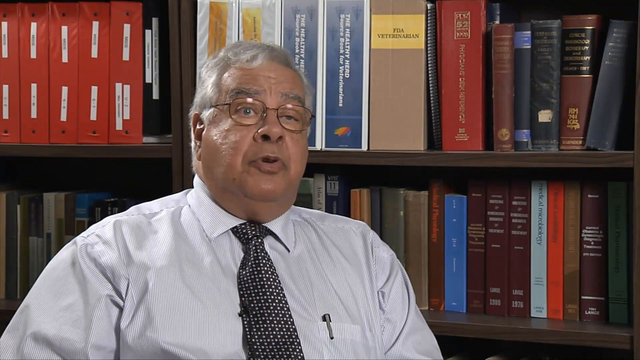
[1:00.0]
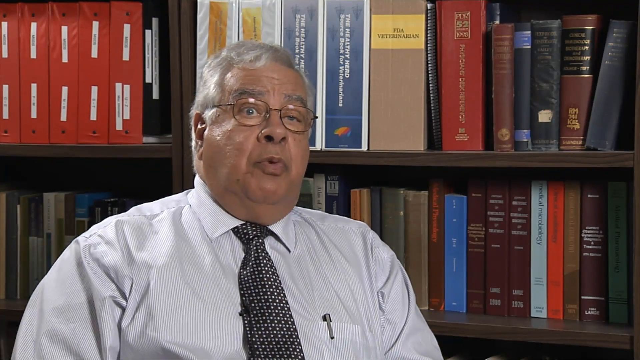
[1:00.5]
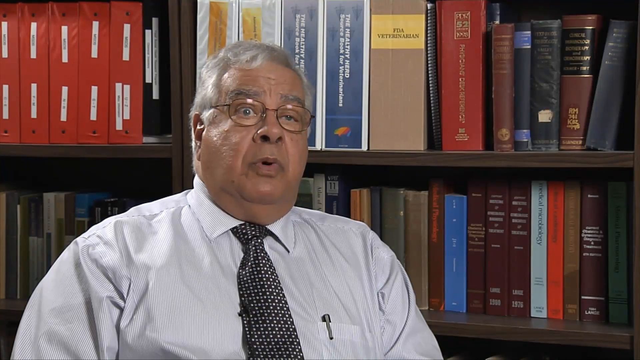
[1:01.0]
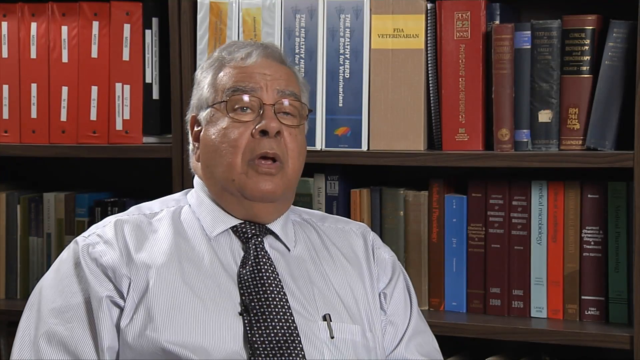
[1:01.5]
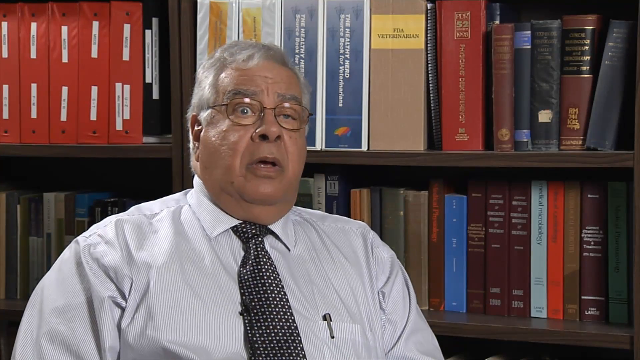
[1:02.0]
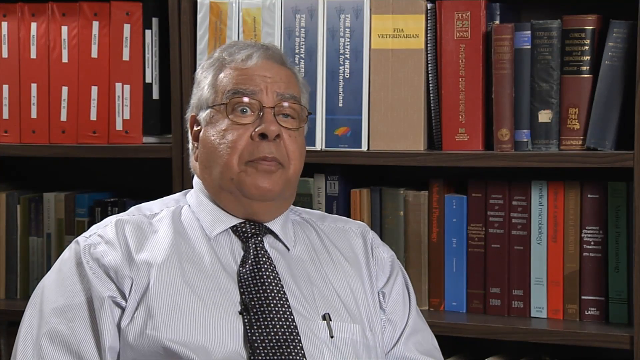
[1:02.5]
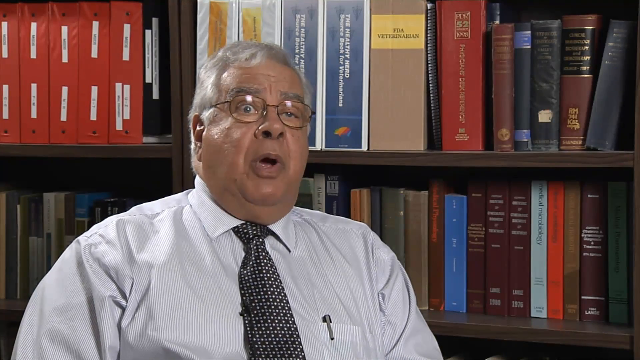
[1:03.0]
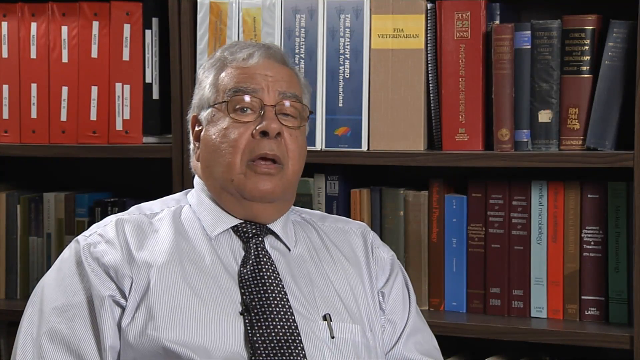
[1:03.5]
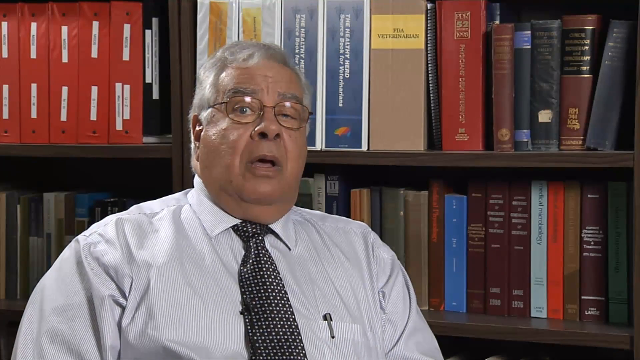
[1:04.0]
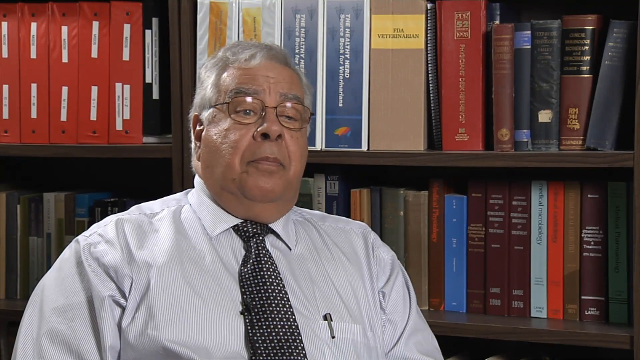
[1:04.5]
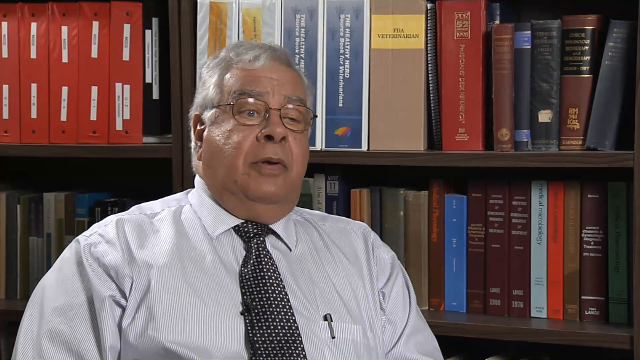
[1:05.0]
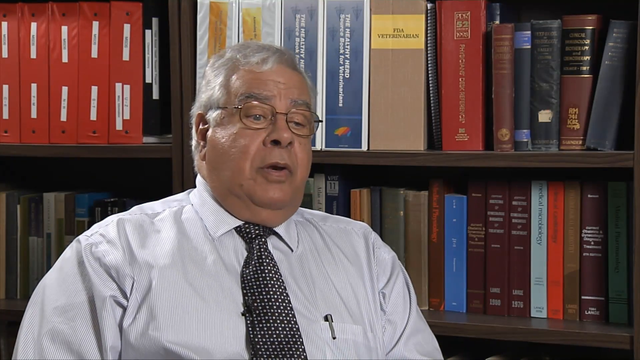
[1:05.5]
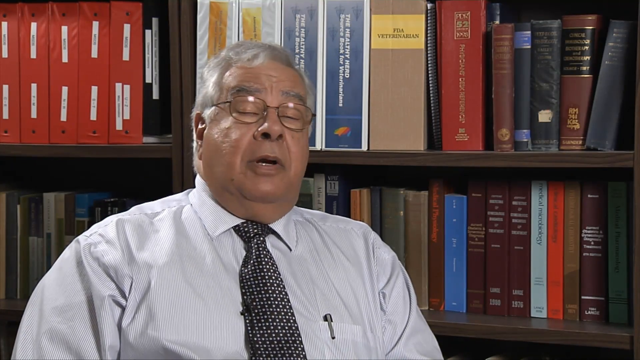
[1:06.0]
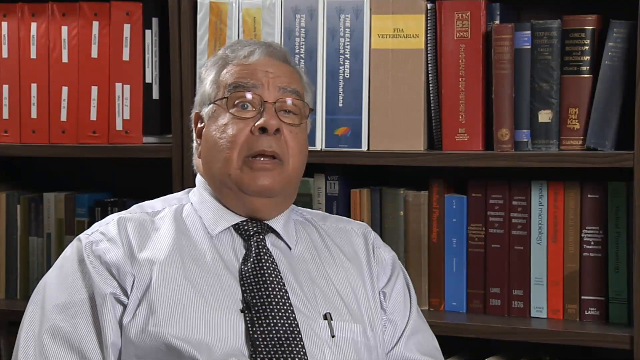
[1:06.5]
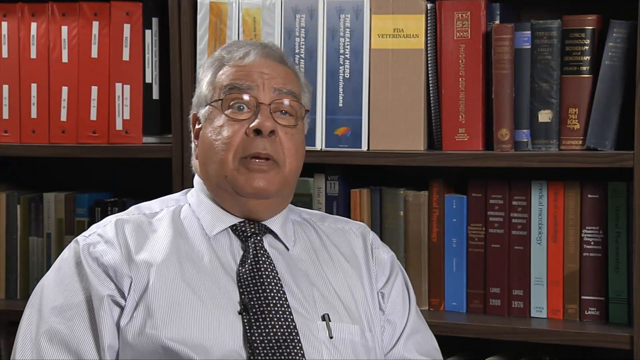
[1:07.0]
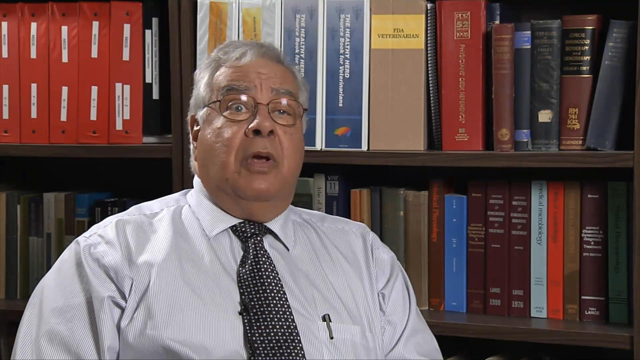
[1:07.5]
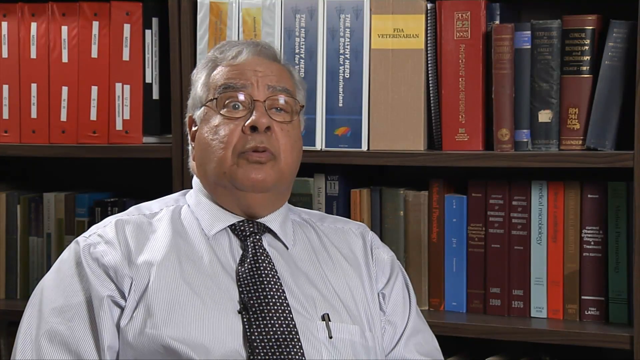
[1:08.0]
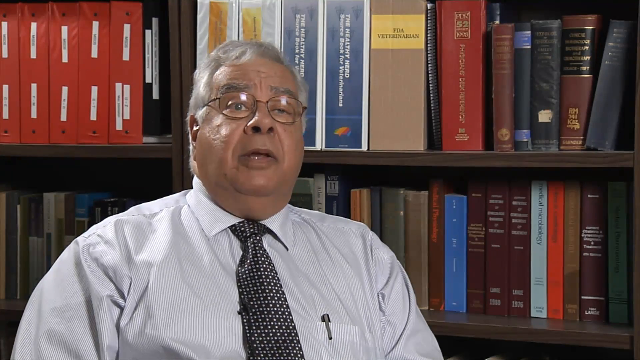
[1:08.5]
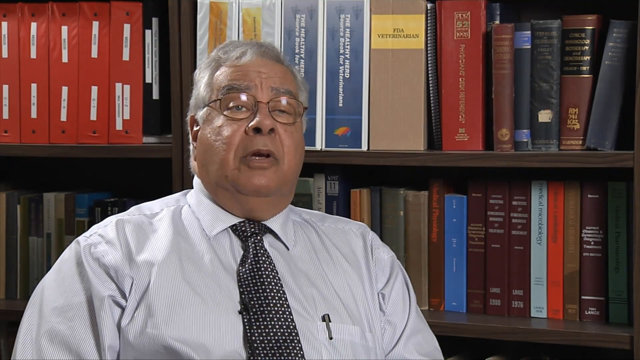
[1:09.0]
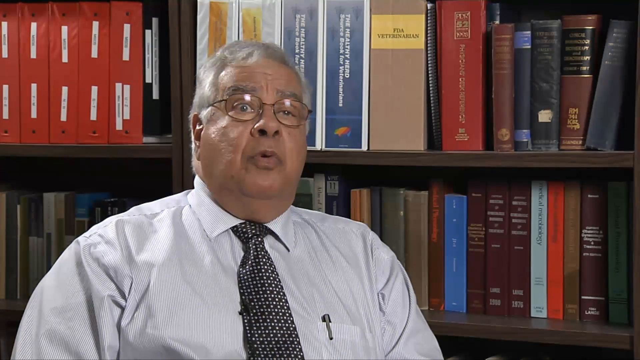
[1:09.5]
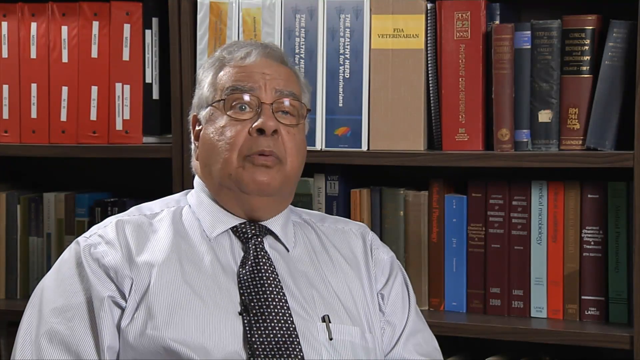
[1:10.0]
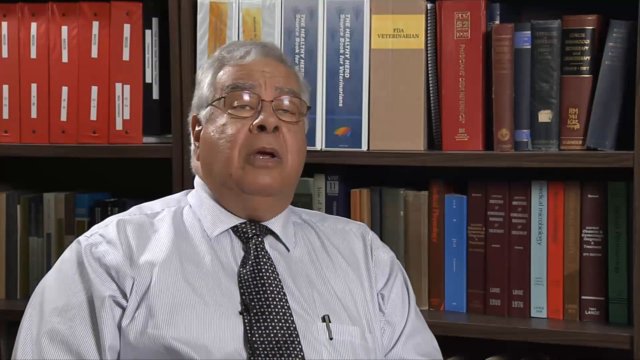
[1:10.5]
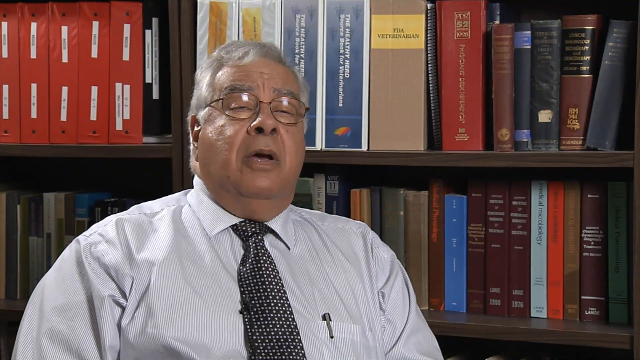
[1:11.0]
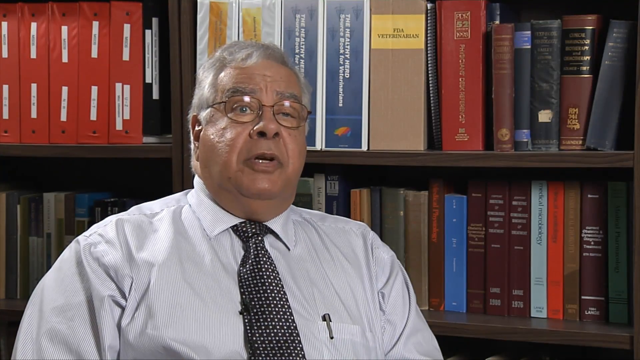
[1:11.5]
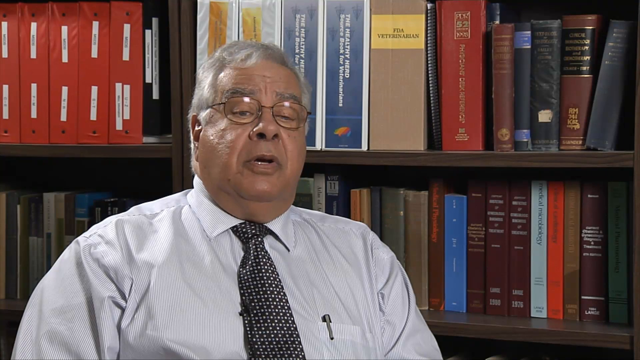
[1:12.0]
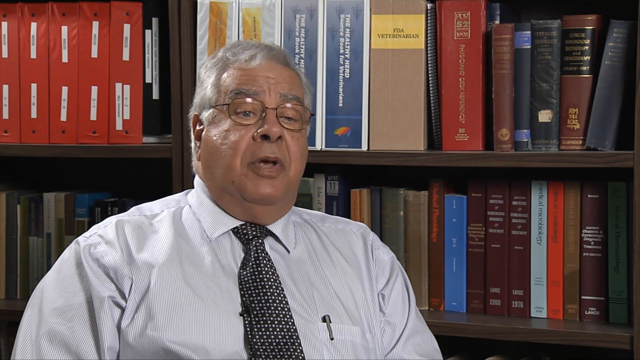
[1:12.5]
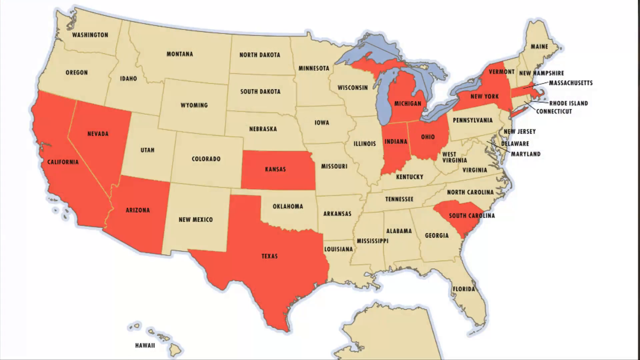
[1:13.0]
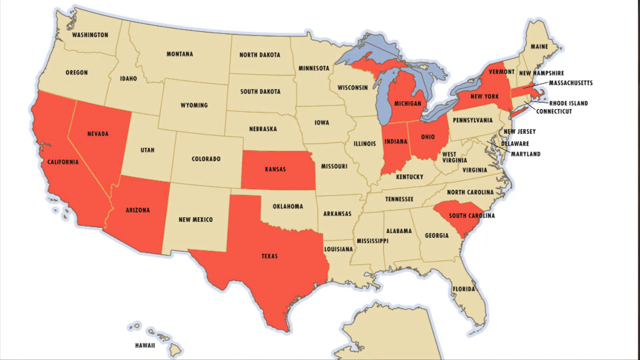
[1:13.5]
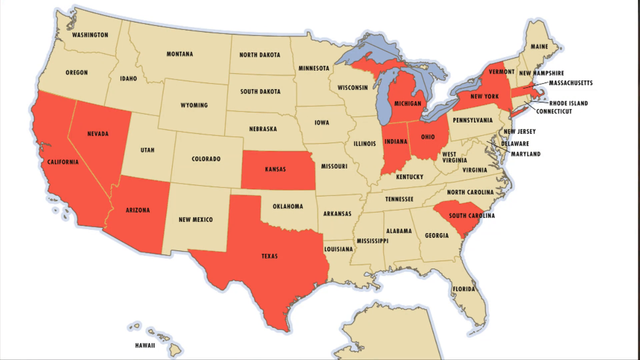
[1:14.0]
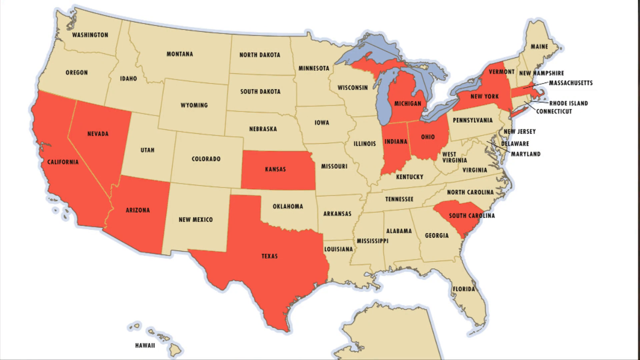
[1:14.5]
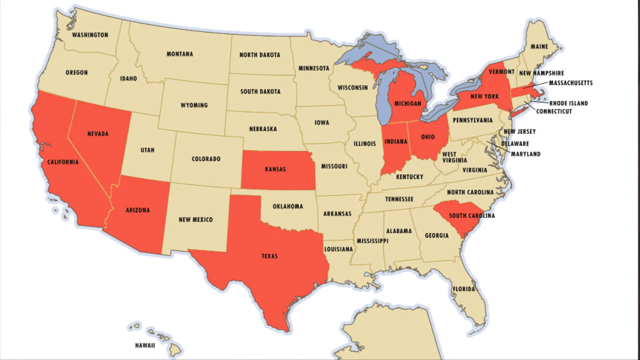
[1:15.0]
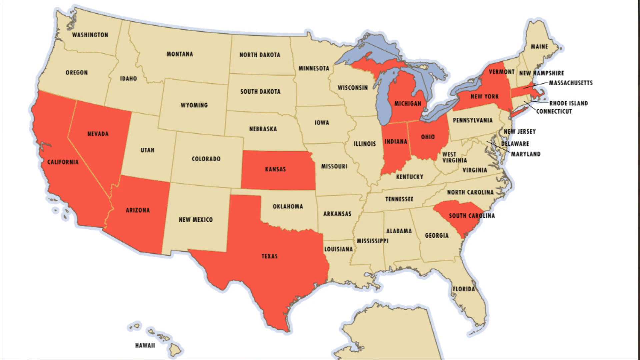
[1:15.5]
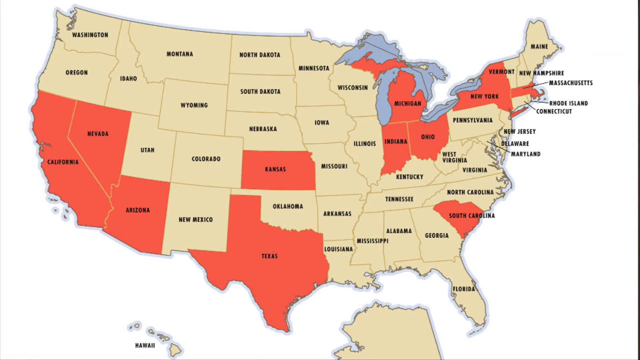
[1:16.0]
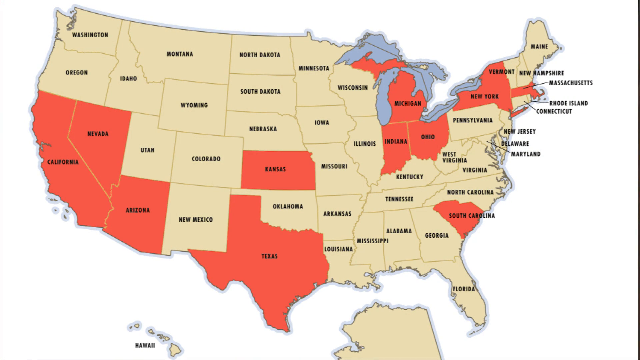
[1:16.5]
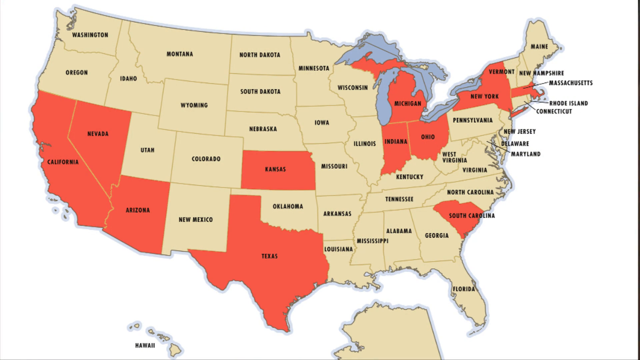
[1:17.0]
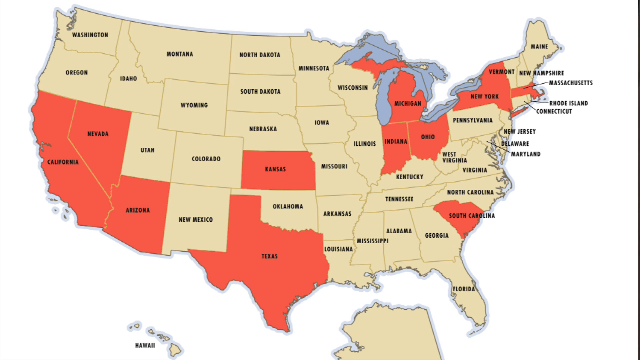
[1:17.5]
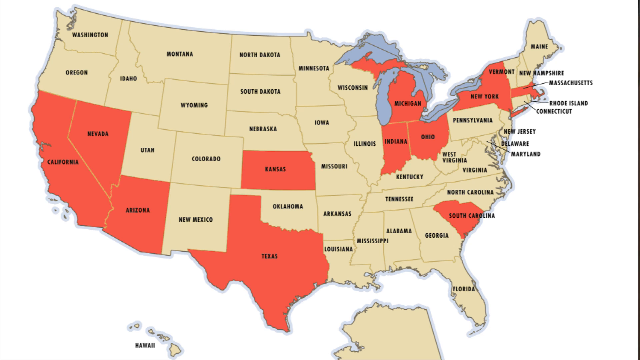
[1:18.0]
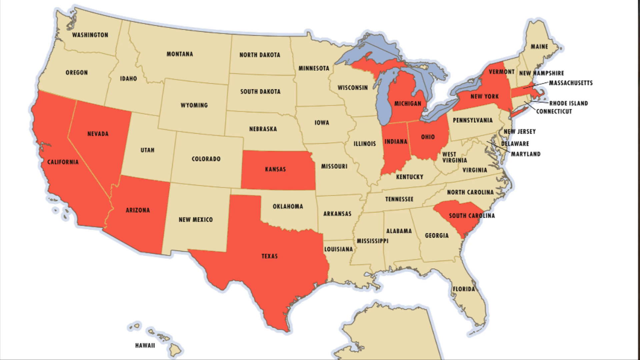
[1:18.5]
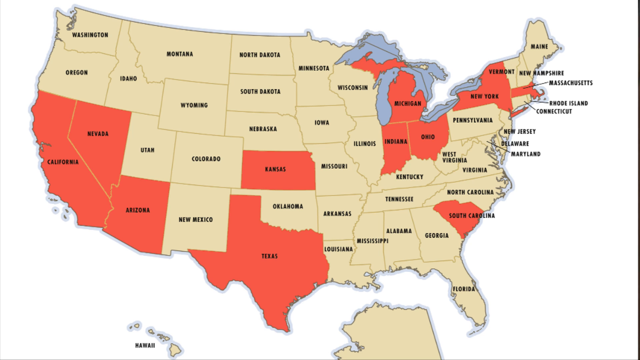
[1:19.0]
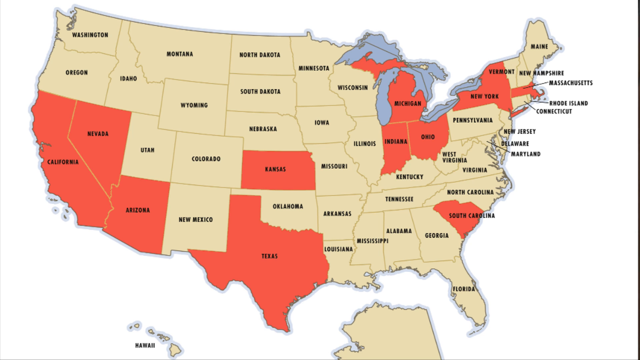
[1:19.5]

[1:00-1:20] The man is still being interviewed, in the same shirt, in front of the same backdrop of books that could be an office or a library. Next, an illustration of a U.S. map appears, color-coded in red, yellow and grayish-blue. No key is visible; the states in red are presumably the ones showing the most cases. There is no other writing on the map.